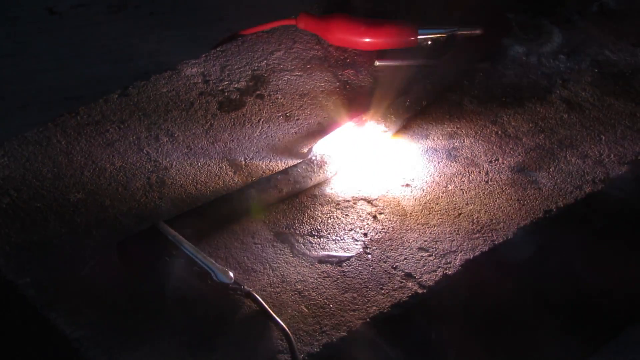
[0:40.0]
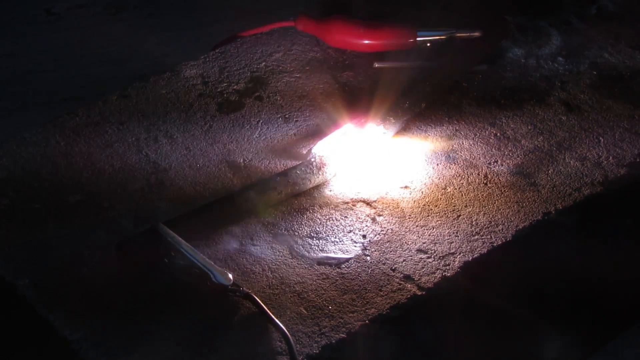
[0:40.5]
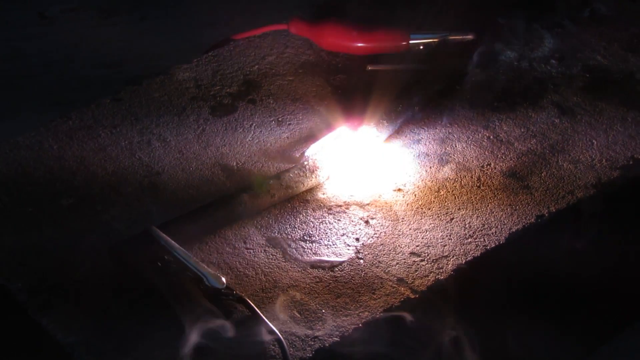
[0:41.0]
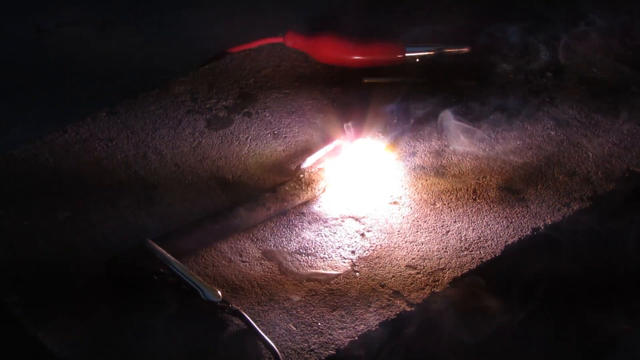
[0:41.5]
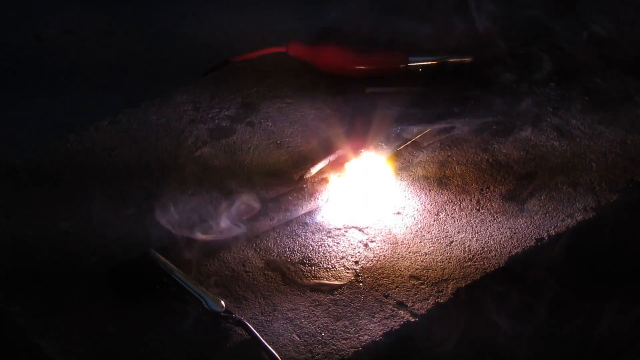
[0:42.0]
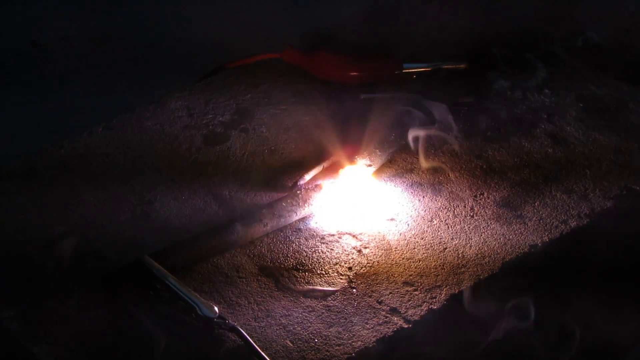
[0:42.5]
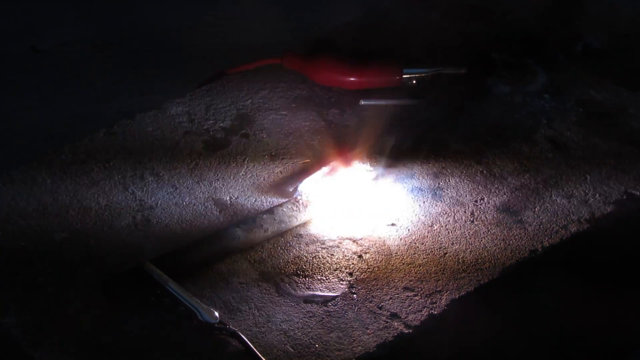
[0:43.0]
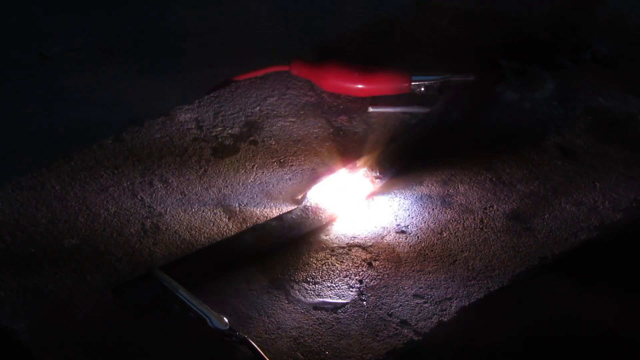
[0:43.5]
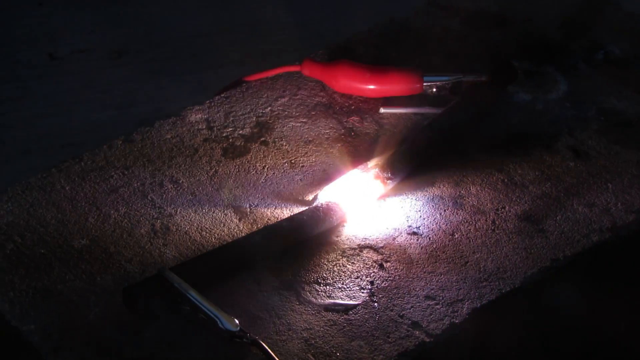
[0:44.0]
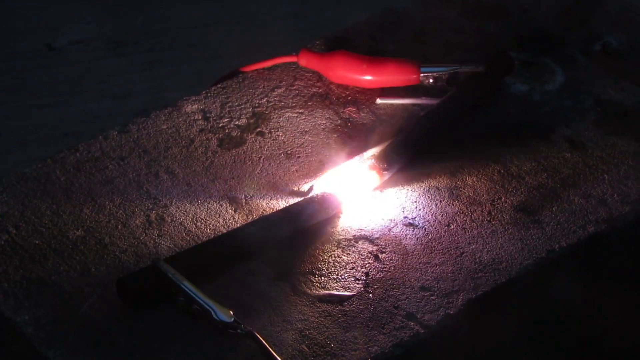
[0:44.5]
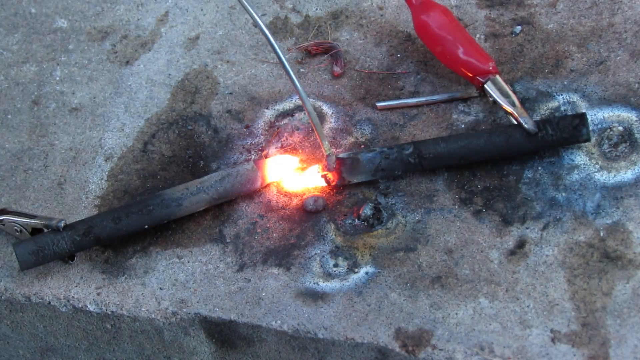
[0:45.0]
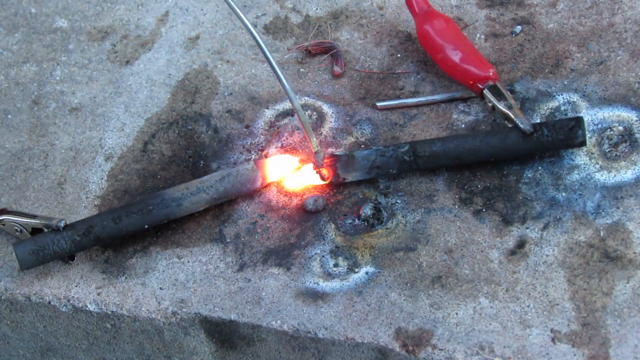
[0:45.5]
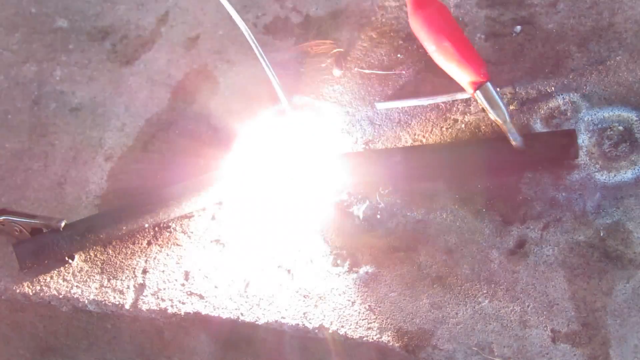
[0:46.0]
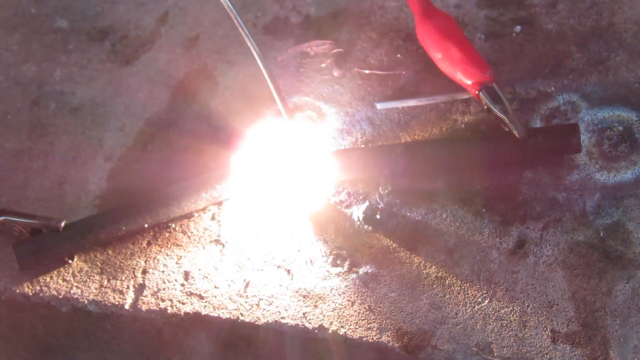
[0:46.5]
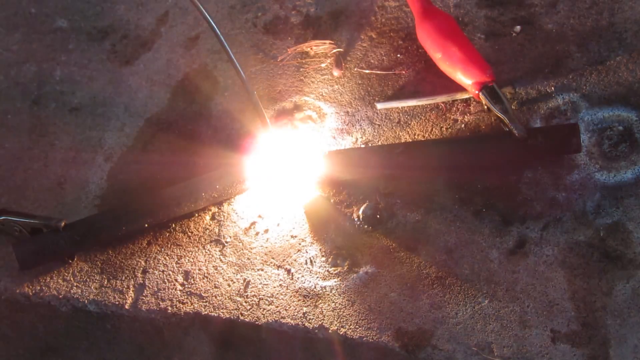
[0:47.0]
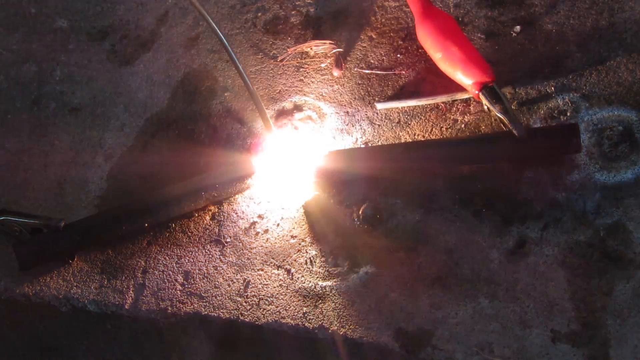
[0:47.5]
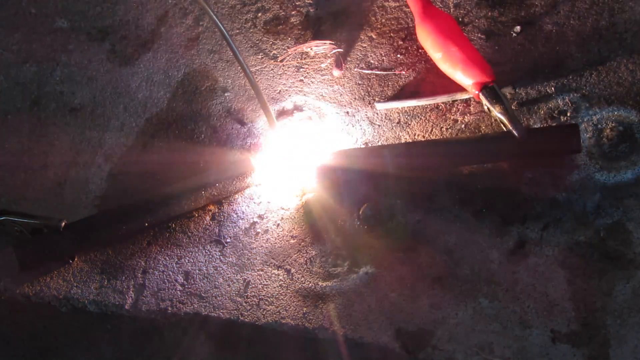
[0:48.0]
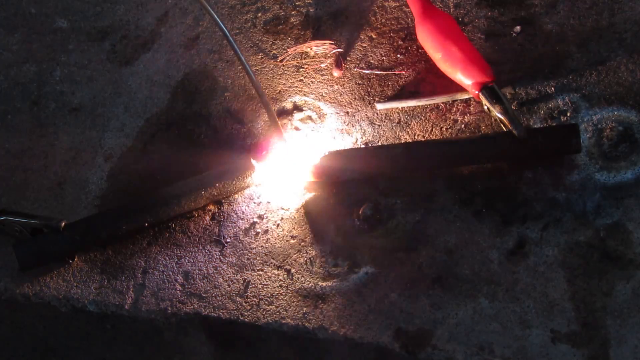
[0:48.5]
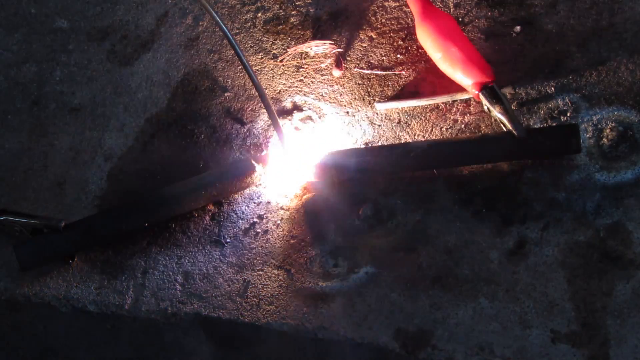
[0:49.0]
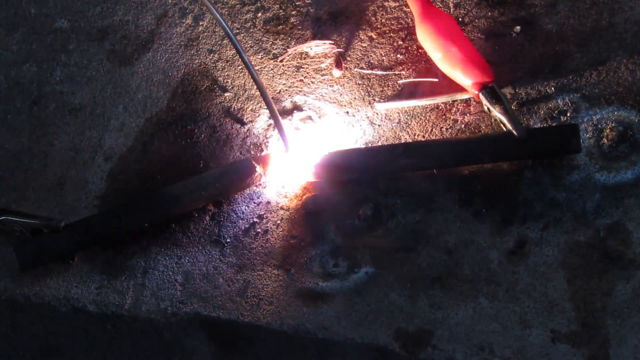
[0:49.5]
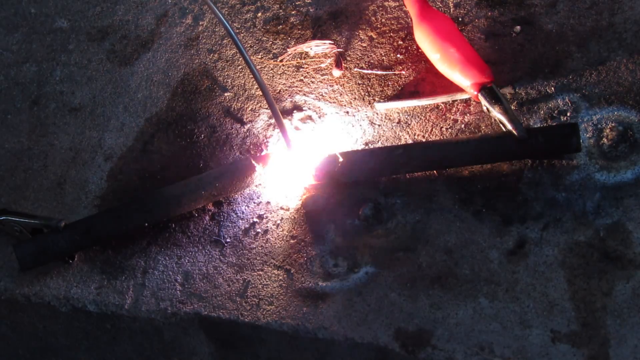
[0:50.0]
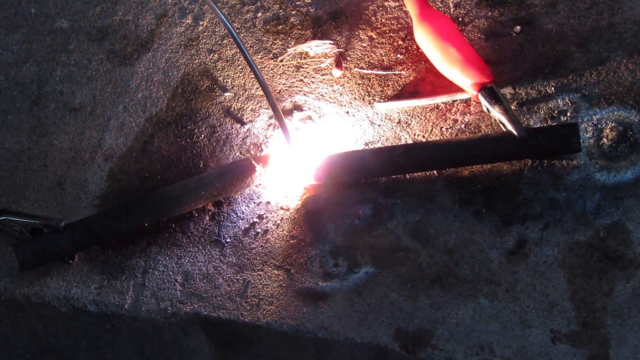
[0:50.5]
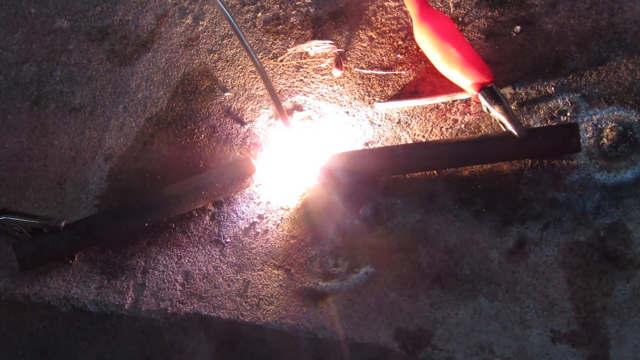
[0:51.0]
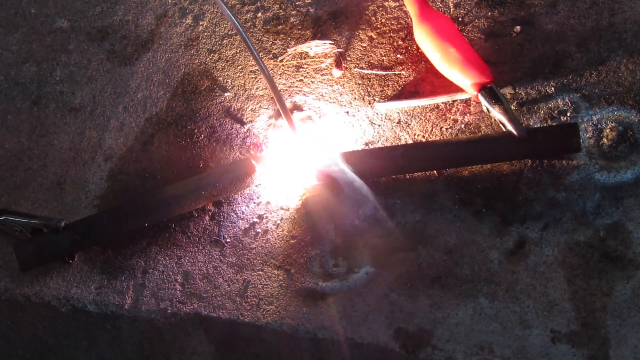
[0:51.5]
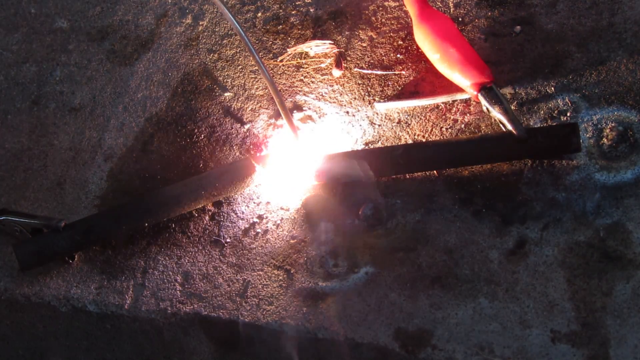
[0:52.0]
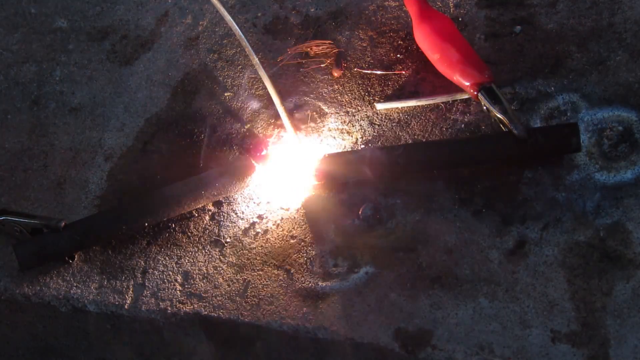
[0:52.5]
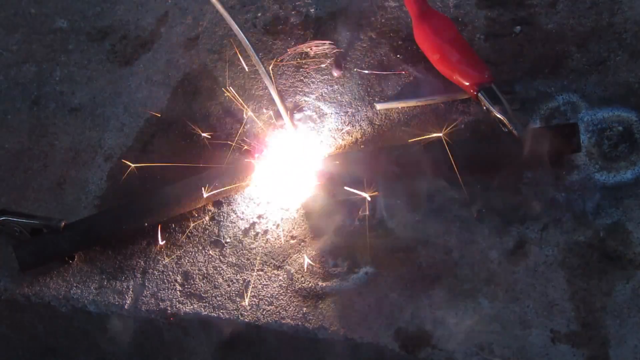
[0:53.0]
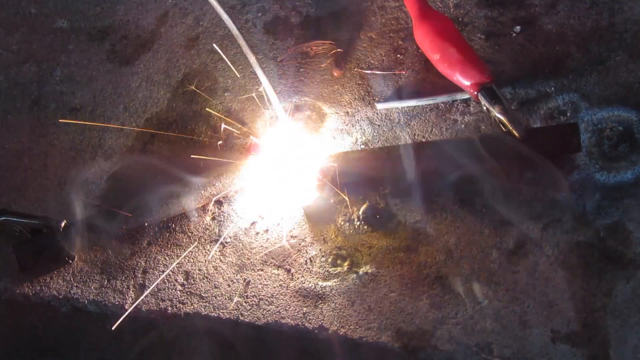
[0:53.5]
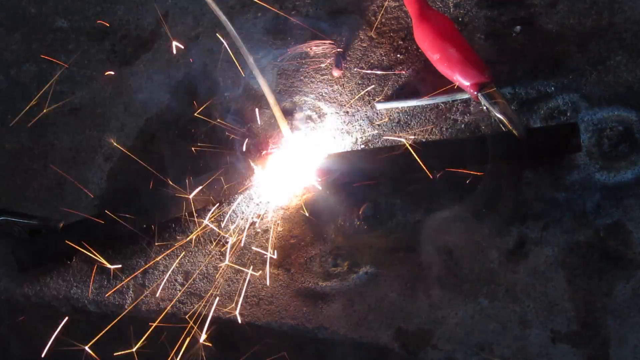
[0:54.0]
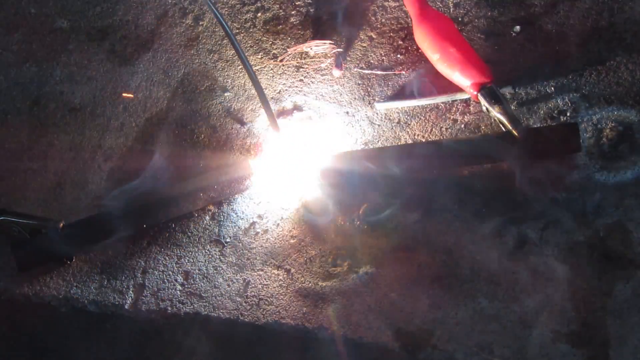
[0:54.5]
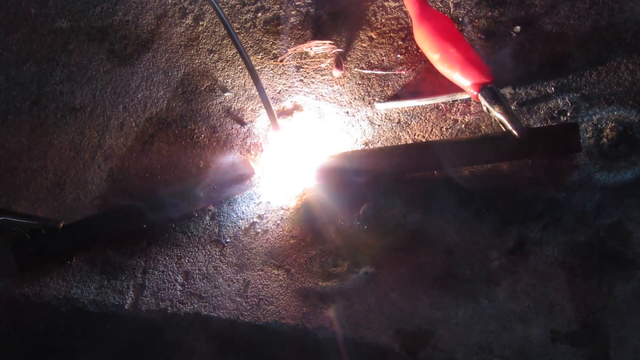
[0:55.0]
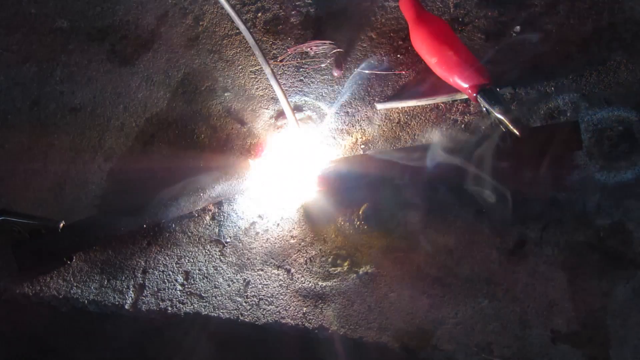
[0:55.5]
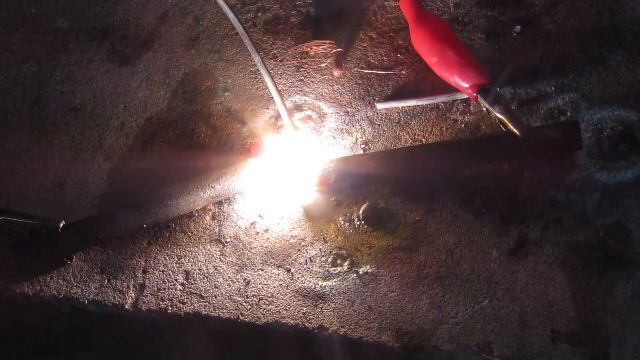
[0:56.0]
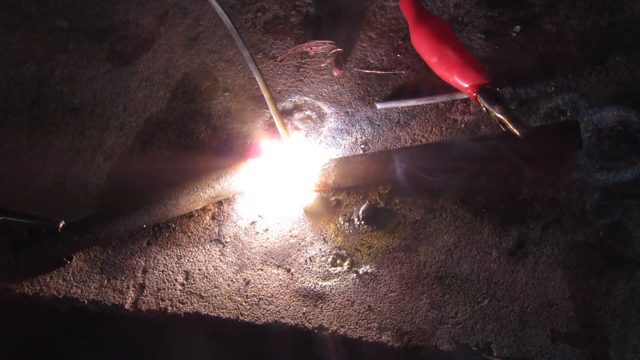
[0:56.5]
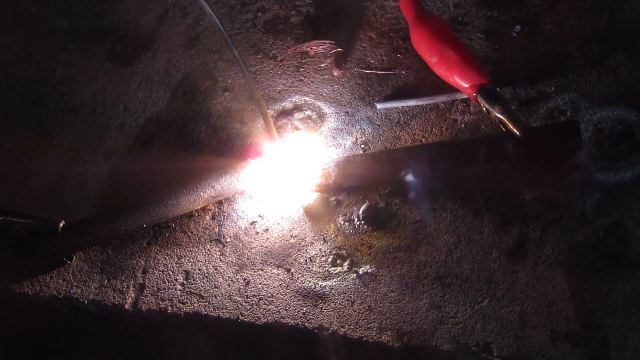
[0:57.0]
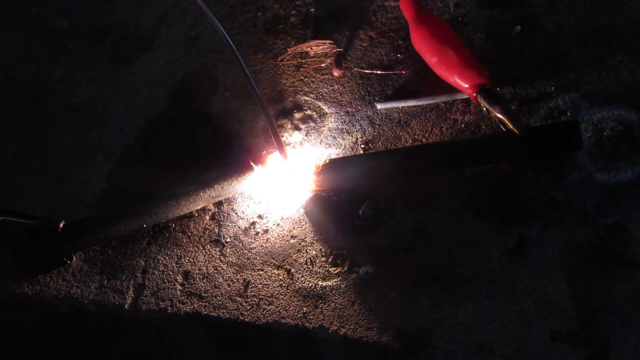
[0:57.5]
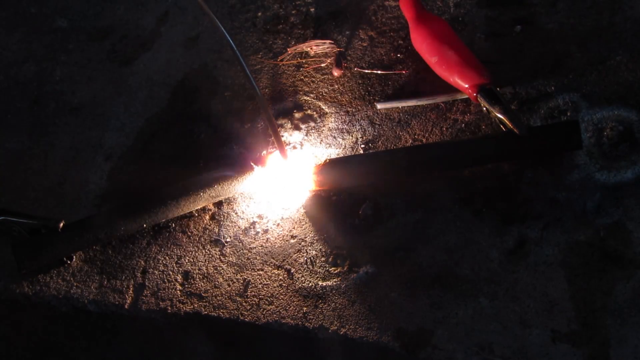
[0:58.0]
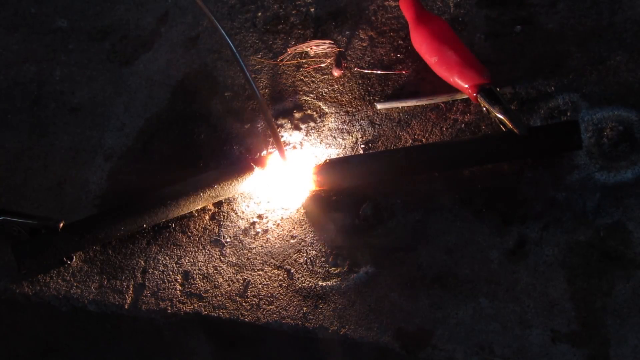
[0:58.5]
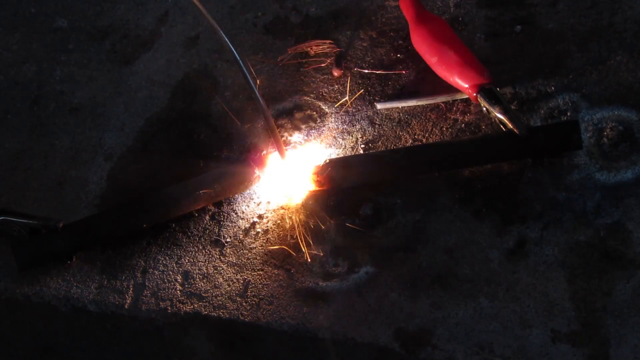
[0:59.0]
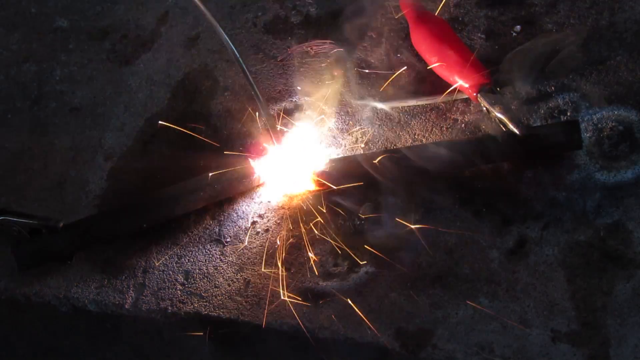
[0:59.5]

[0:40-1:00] A close-up view shows the two black rods on the brick along with the red tool for a few seconds. The video then switches to a brighter, overhead shot of the brick and the tools. Some sort of light liquid comes from both black cylinders, and a silver pole touches the one on the right. After the silver pole touches the right cylinder, the light explodes in a burst between the two black cylinders. For the rest of the shot the silver pole keeps touching one of the cylinders, creating light between the two, and sparks come from the light.